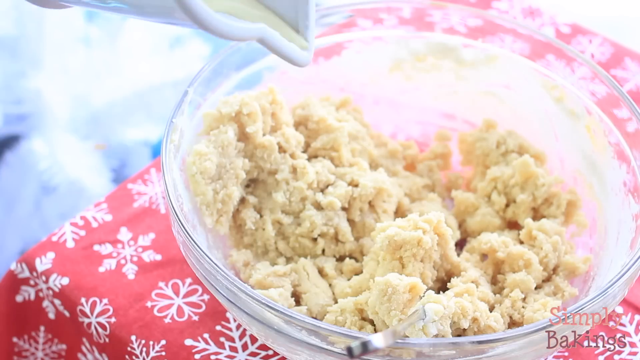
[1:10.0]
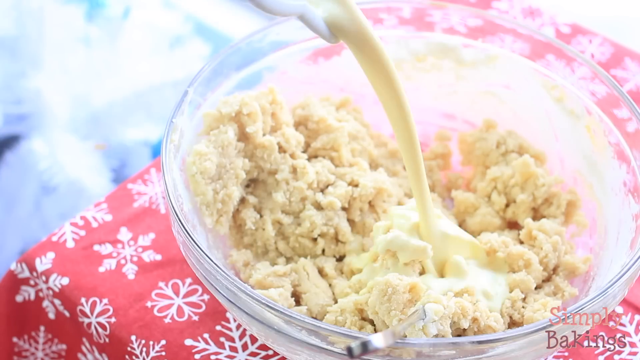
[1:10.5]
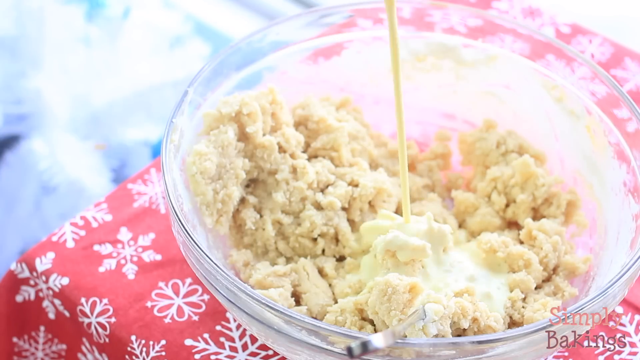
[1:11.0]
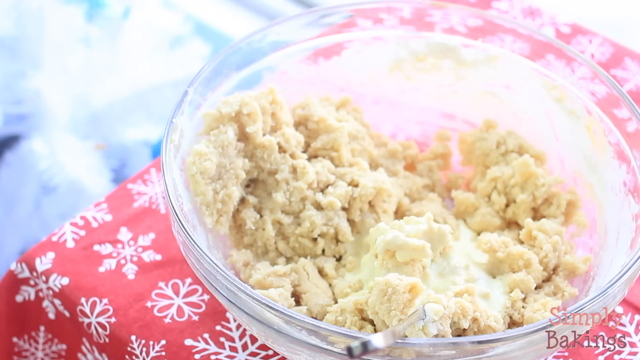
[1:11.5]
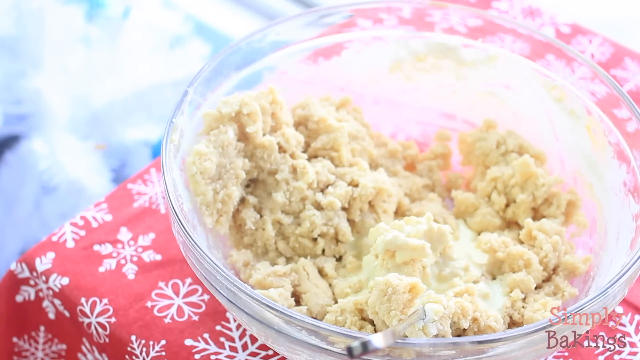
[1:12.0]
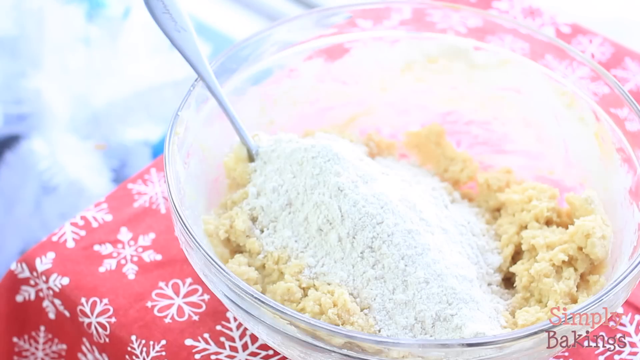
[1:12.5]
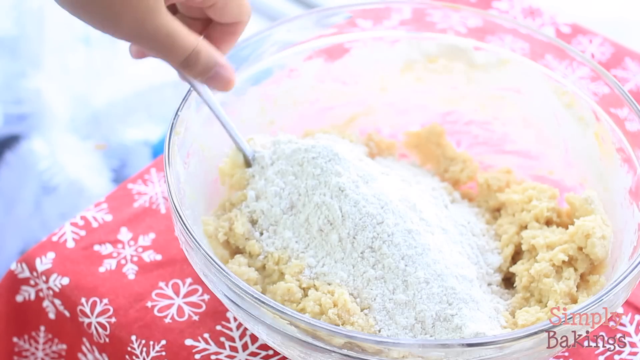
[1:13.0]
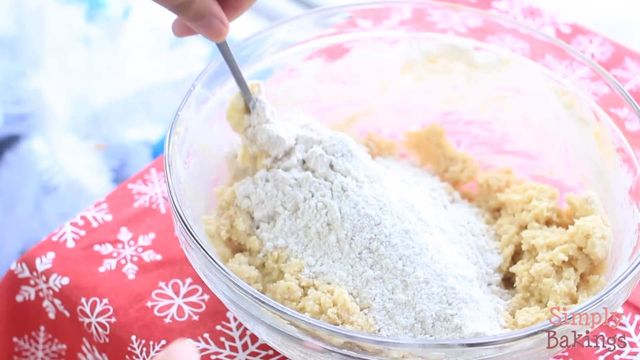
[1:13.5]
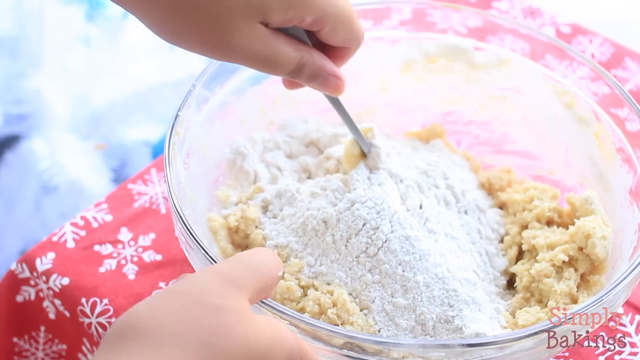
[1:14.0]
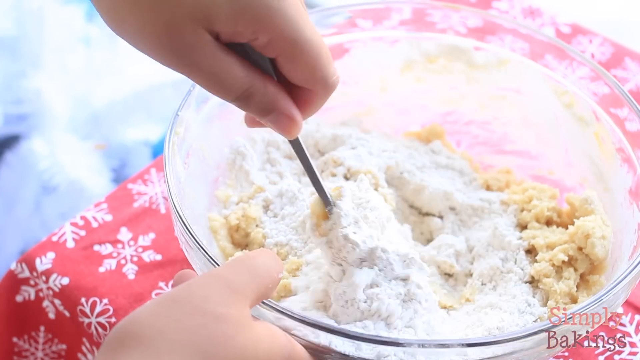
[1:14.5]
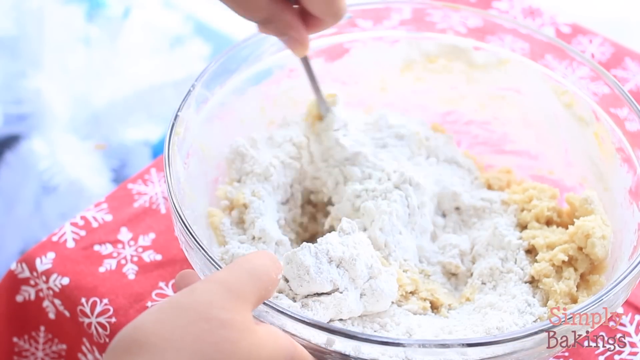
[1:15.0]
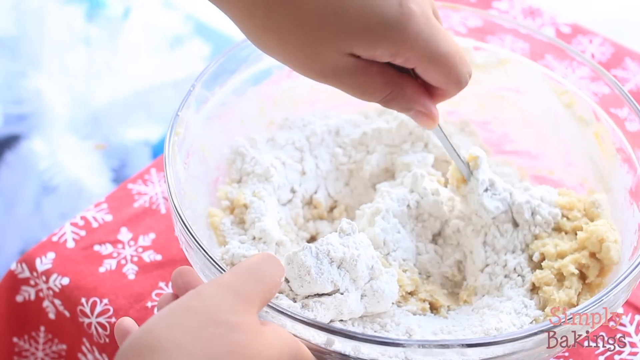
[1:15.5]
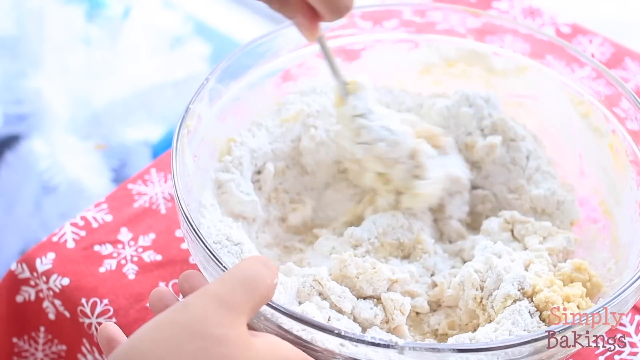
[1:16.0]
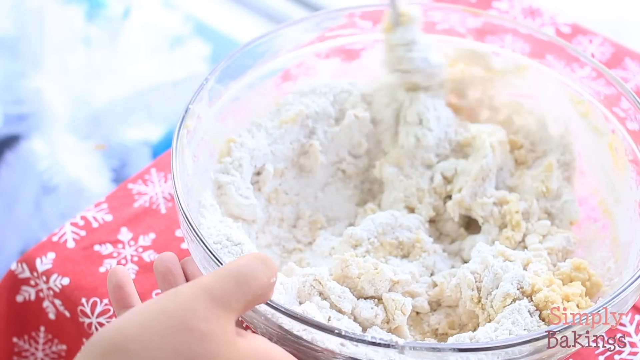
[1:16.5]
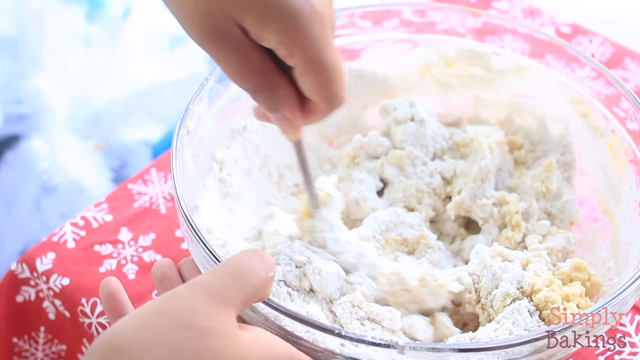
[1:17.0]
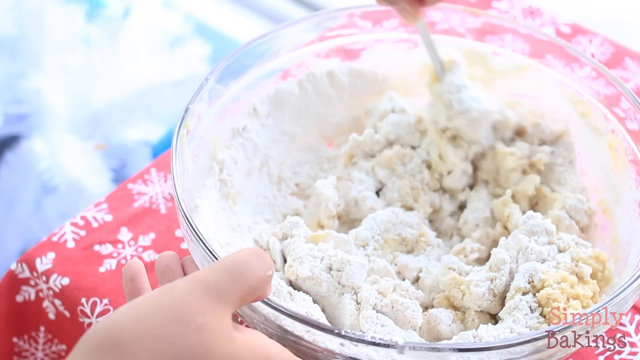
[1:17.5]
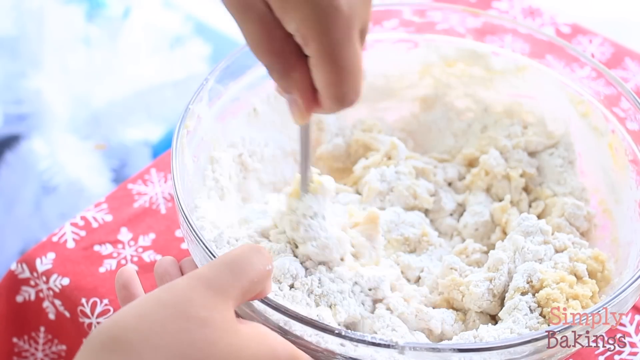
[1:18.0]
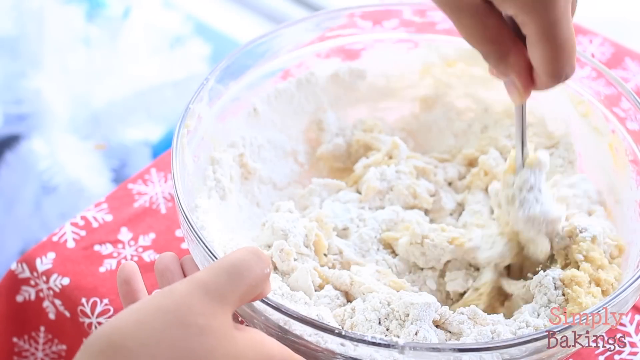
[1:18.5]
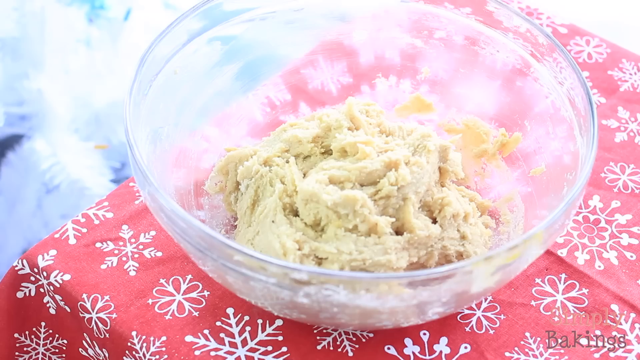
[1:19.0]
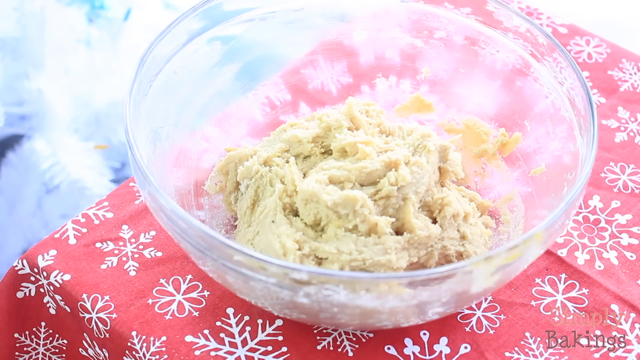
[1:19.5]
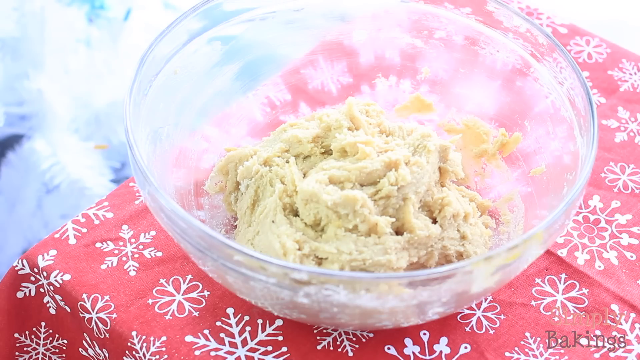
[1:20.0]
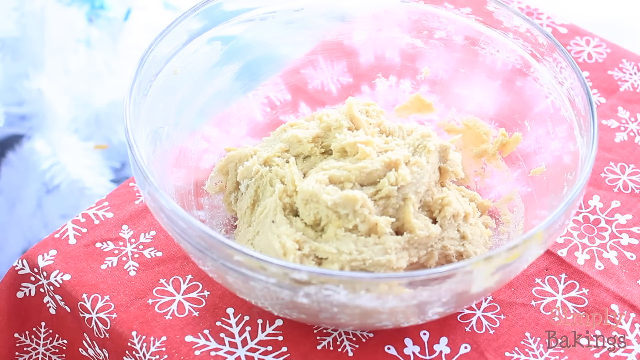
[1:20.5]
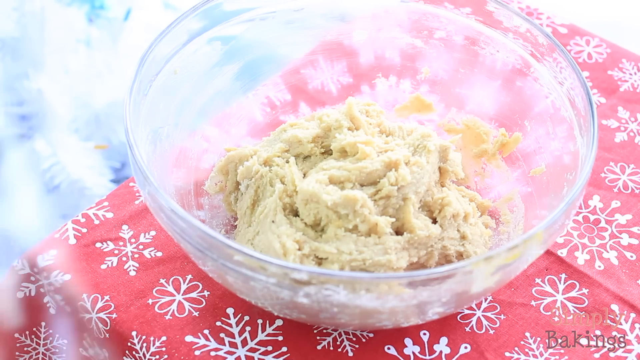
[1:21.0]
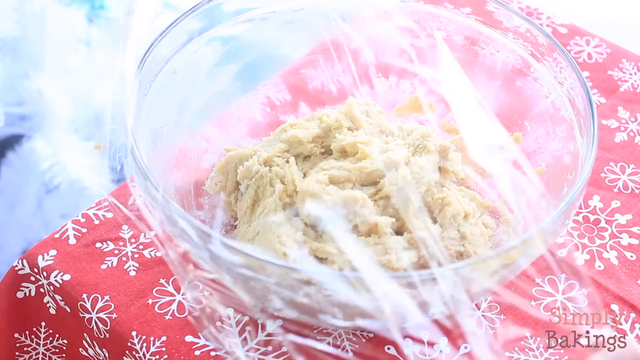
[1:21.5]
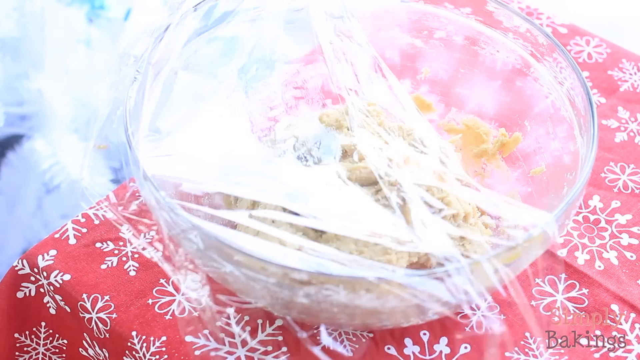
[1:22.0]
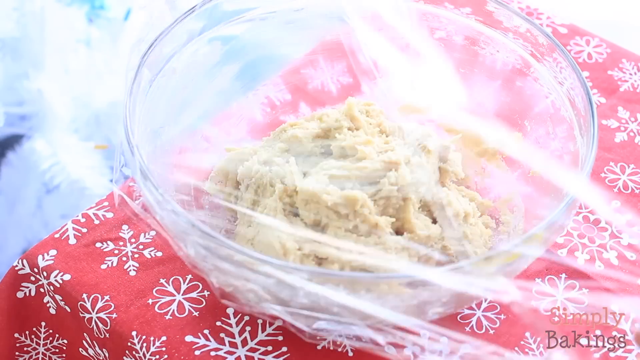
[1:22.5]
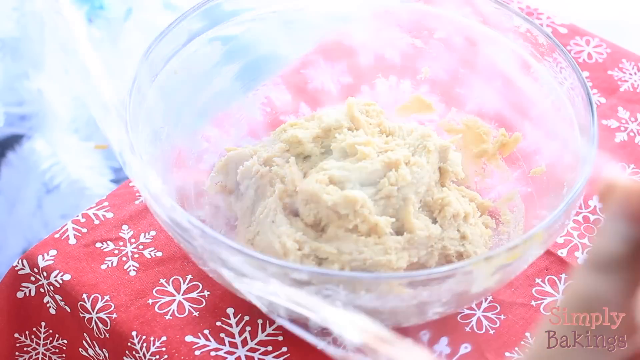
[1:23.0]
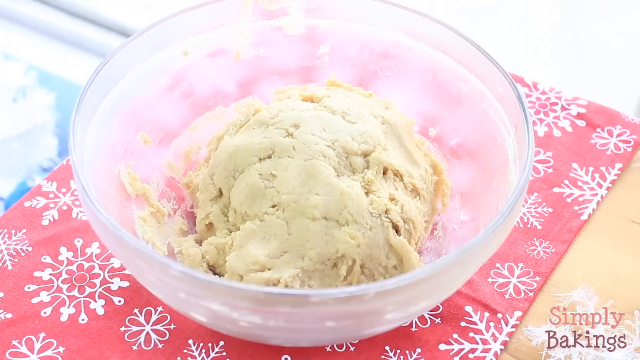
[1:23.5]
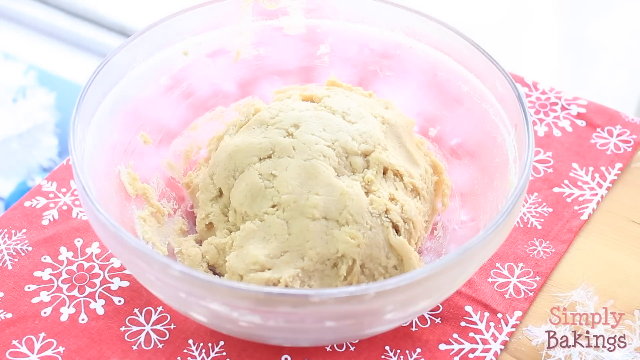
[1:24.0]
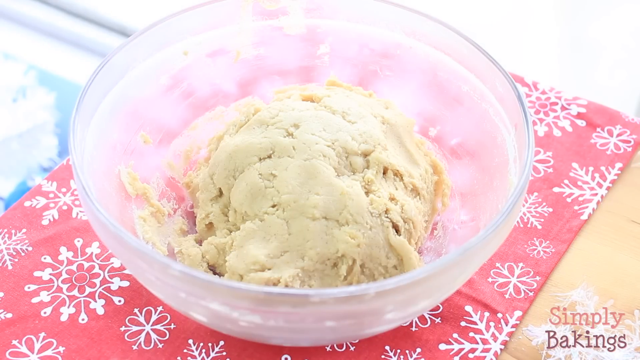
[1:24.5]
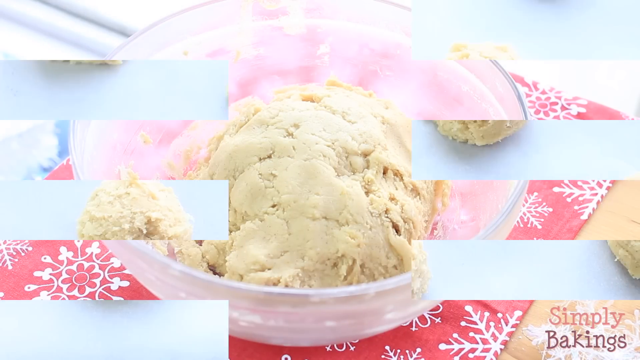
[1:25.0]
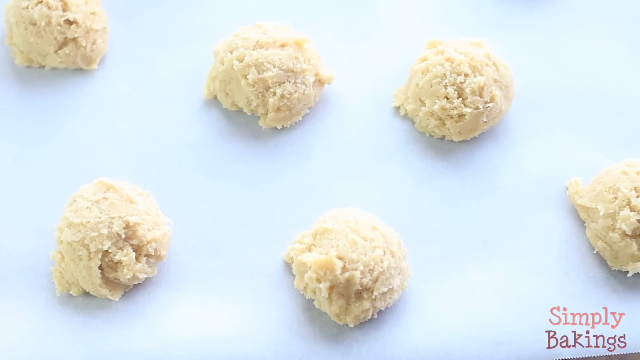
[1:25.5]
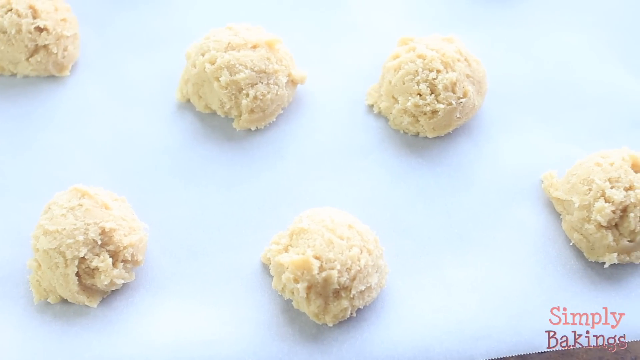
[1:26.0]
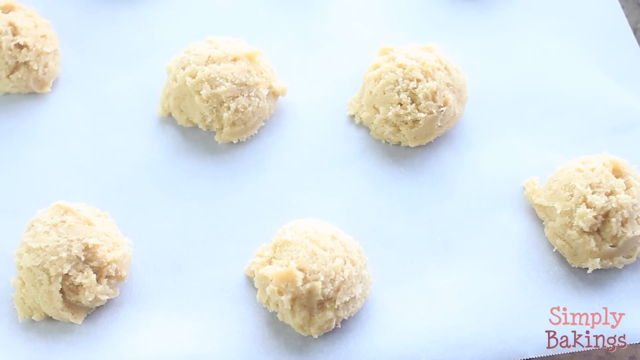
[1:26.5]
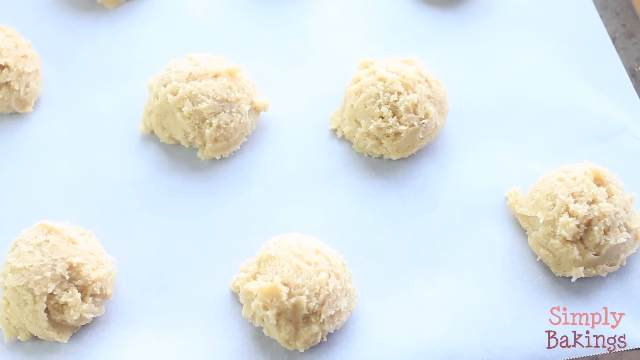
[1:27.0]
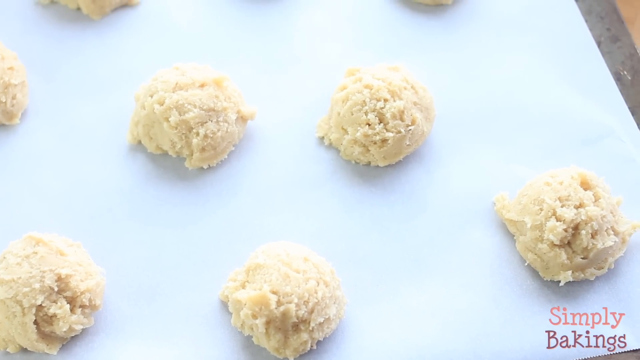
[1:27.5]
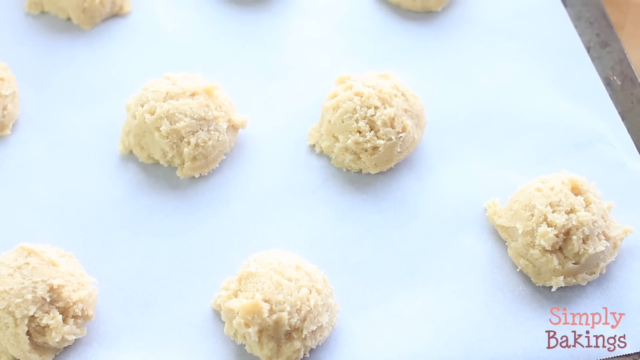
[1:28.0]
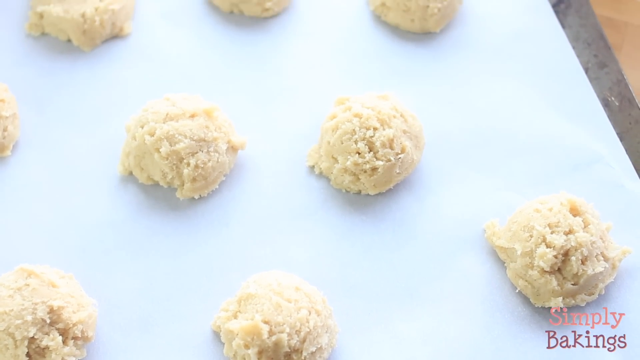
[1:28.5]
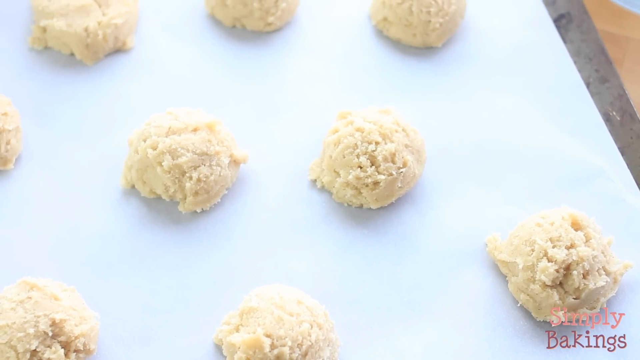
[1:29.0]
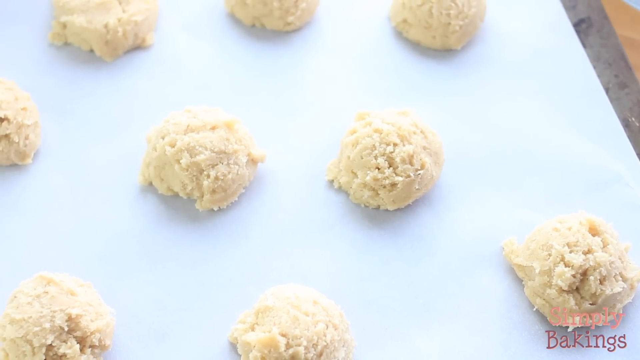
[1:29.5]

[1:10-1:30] The finished crumbly cookie batter is shown. Eggnog is added to the batter, along with some extra flour, and the ingredients are incorporated into the batter to make the eggnog cookie batter.